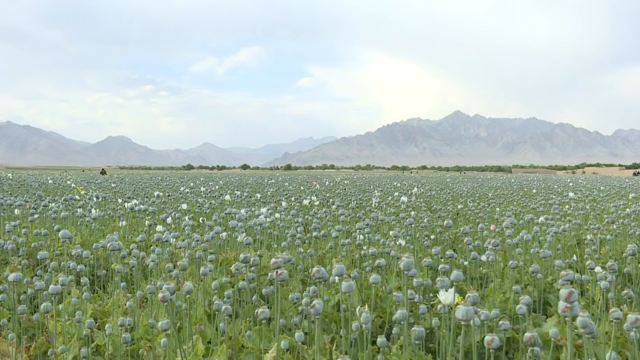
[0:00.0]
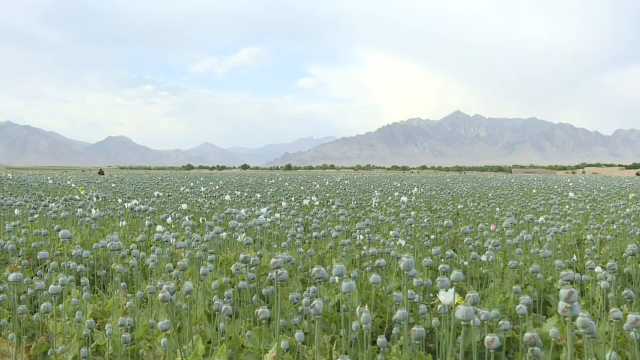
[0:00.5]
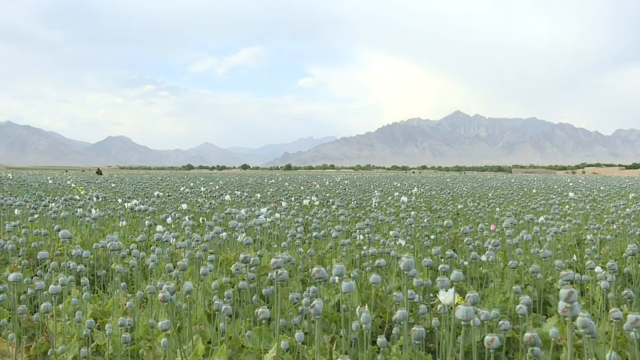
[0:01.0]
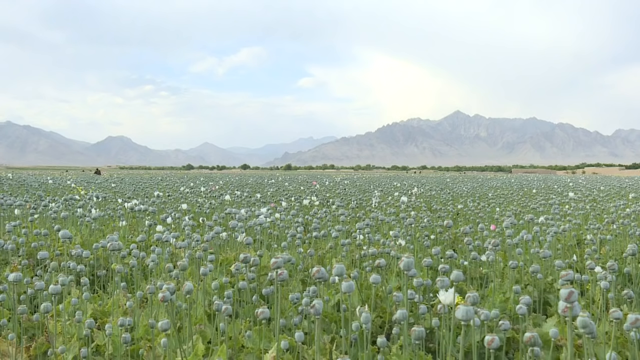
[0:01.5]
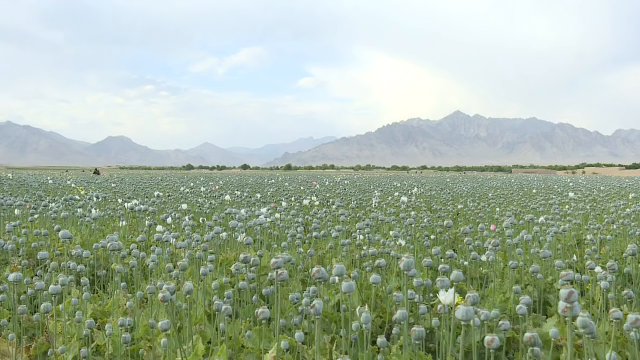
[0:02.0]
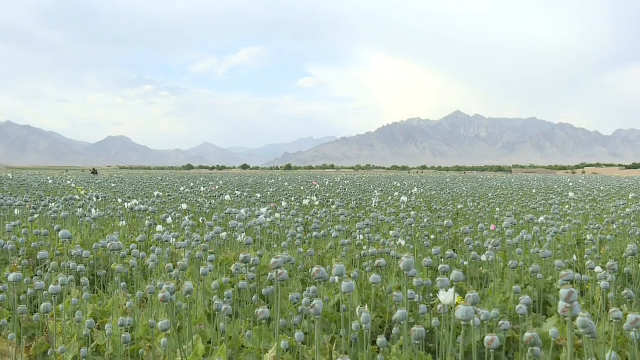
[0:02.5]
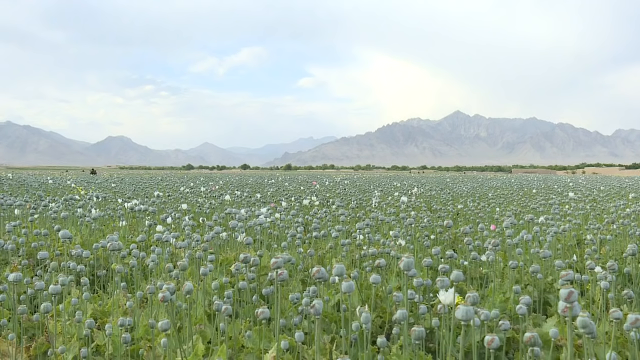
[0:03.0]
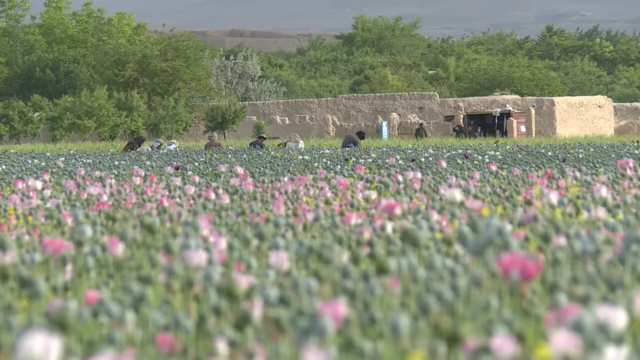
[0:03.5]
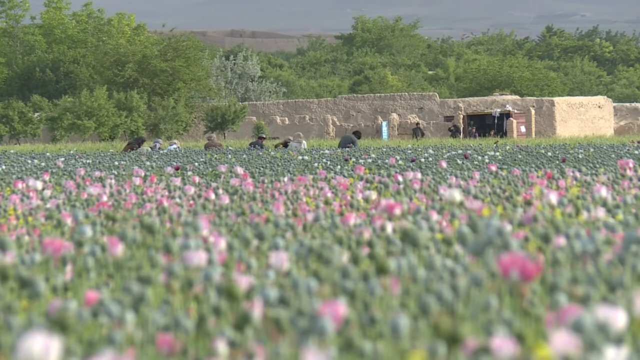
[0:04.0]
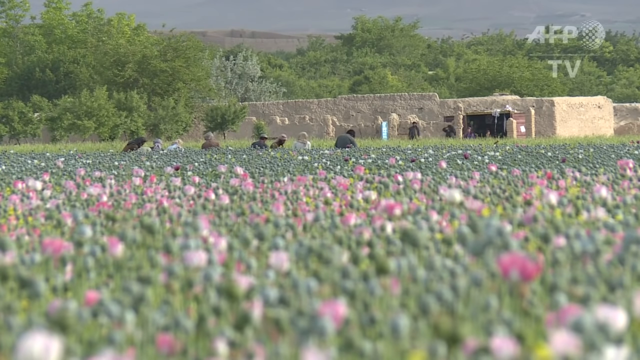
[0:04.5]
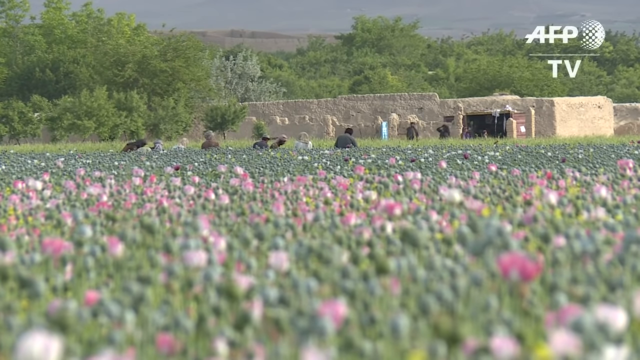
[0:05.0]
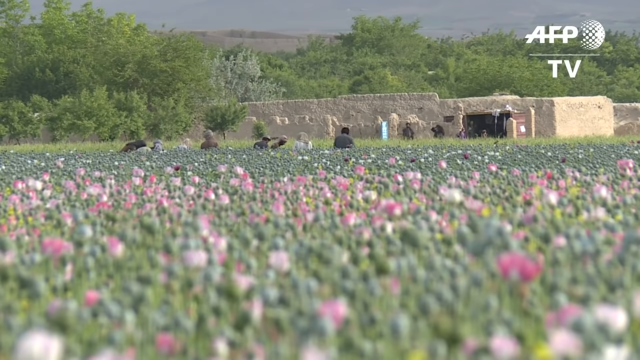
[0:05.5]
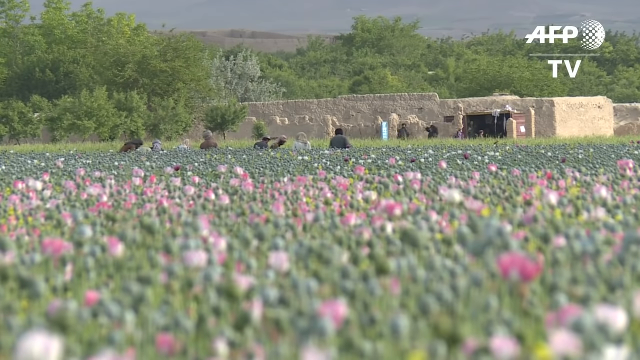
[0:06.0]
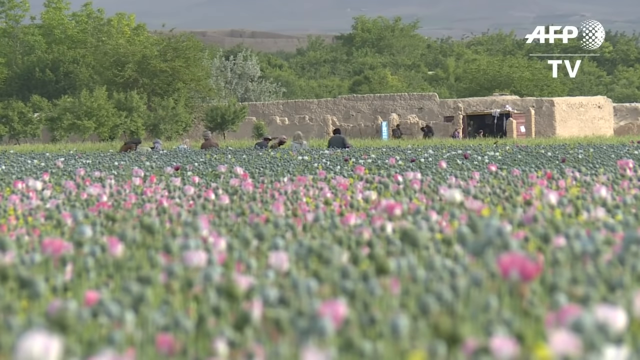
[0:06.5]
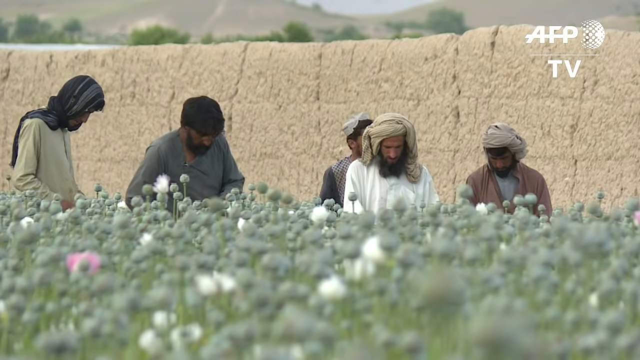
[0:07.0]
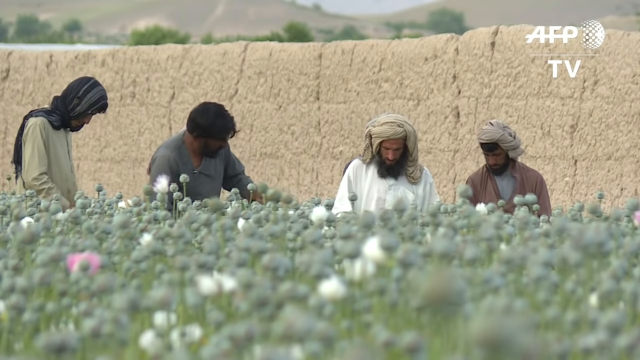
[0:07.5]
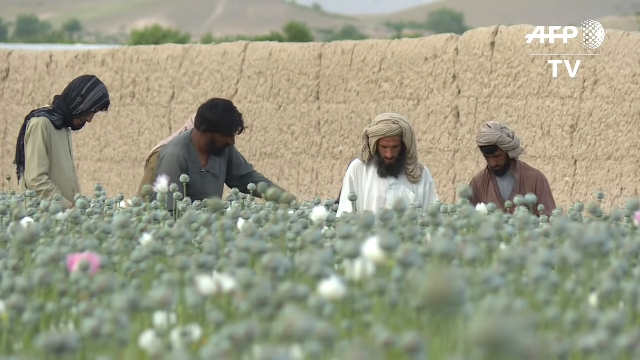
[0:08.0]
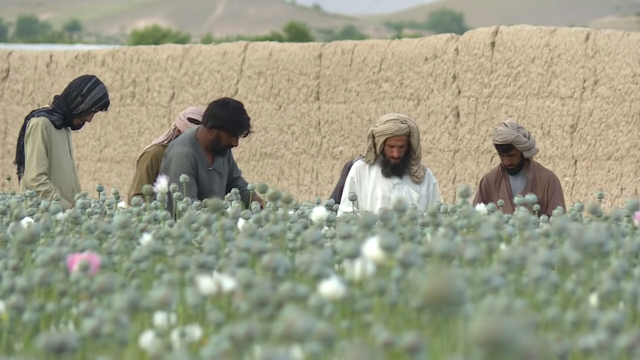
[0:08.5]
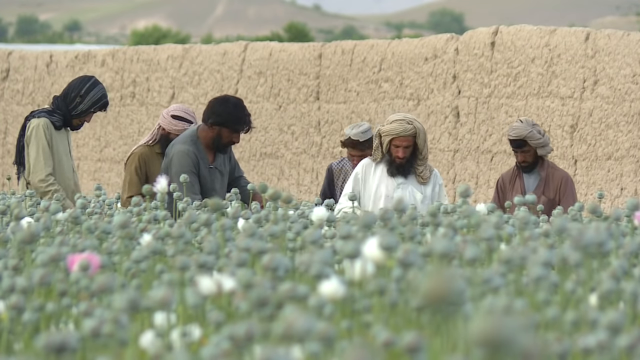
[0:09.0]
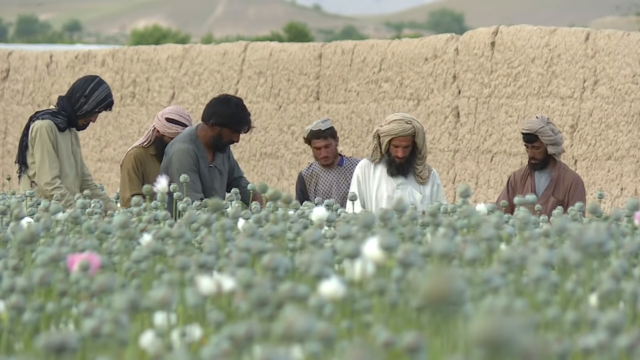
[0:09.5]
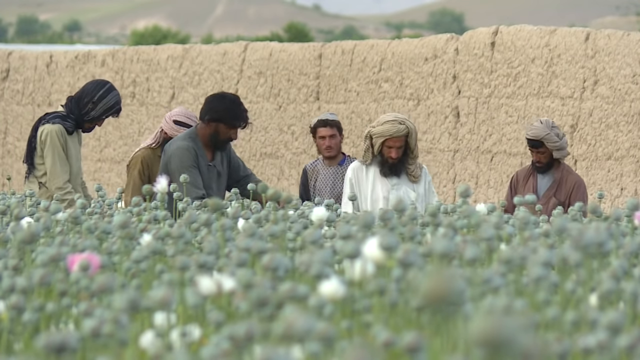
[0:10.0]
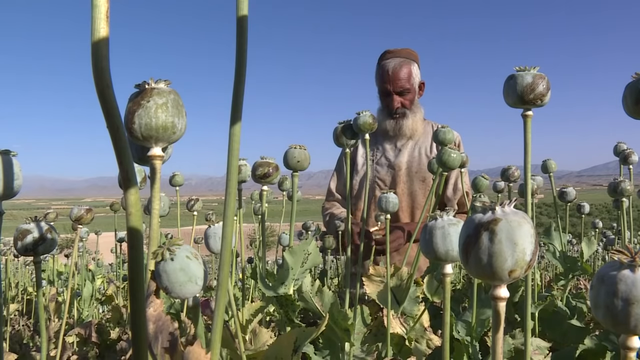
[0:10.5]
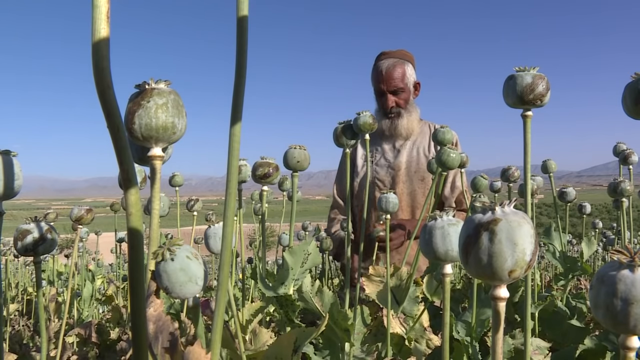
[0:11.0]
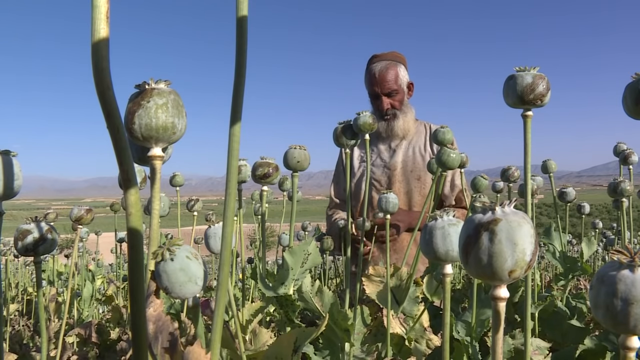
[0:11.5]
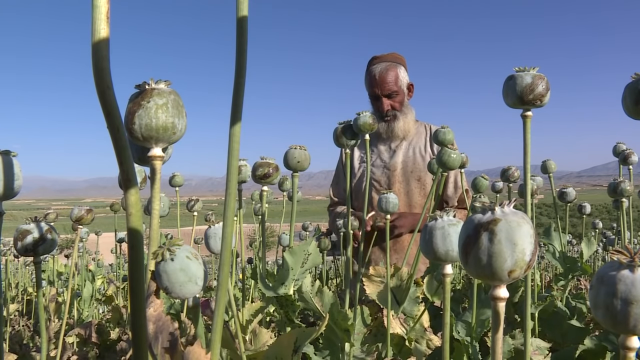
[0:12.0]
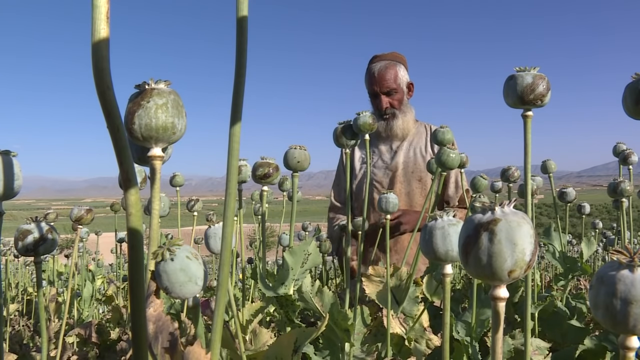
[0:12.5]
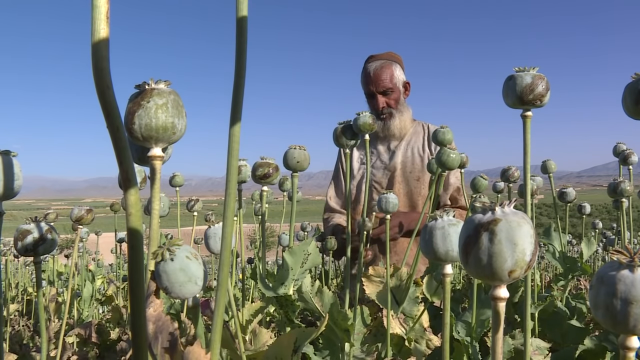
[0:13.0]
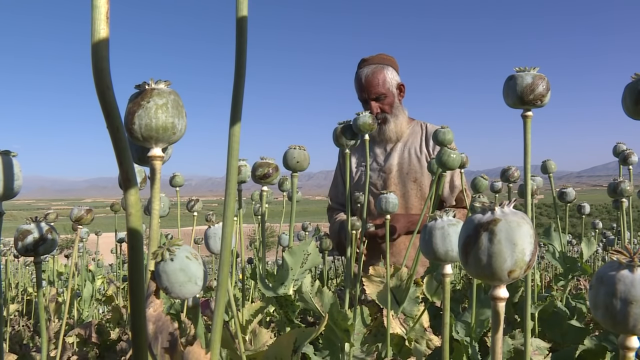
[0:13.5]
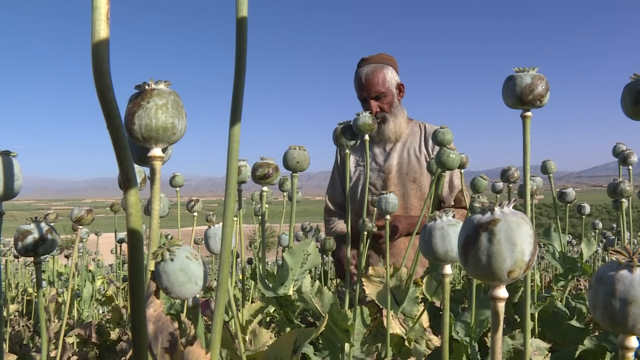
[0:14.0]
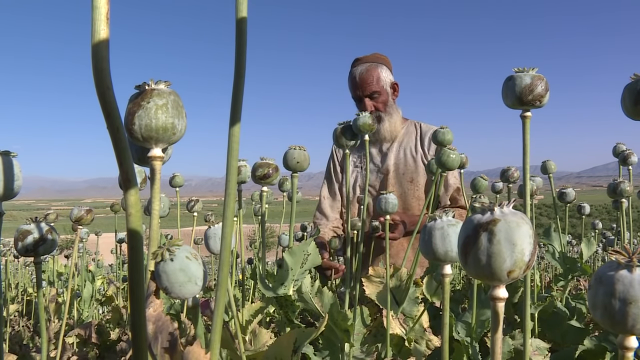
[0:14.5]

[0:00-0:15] This AFP TV video is about growing poppies. It opens with a very wide shot, almost at ground level just above the poppies, showing poppies stretching far and wide in purple and green under a nice blue sky, with mountains in the far background. It cuts to a shot of people working in the poppy field. From the bottom to about two thirds of the way up is the green poppy with purple tips, the flower bulb portion. About six people are visible from roughly the shoulders up, bent over and working in the poppies. In the background on the right is something like a stone building, with about five people inside the entranceway of the door; the door is on the right side, and behind it are green trees and a little sky. It then cuts to a very close shot of six men: four are plainly visible and two can only be seen a little behind the men in the middle. The man on the left wears a tan shirt and a gray head wrap. To his right is a man with a dark gray shirt and black hair, then a man in a white shirt and tan head wrap, and at the far right a man with a tan head wrap and tan shirt. The two men behind them are barely visible, and behind them are a concrete wall and the sky. Next is a close-up of one man working in the field, with big plants coming up as tall as his head topped by big bulbs, all green.